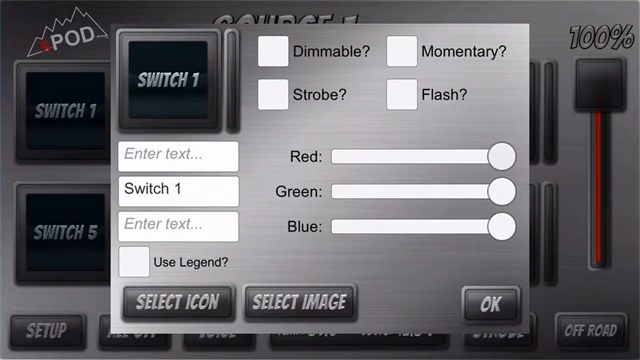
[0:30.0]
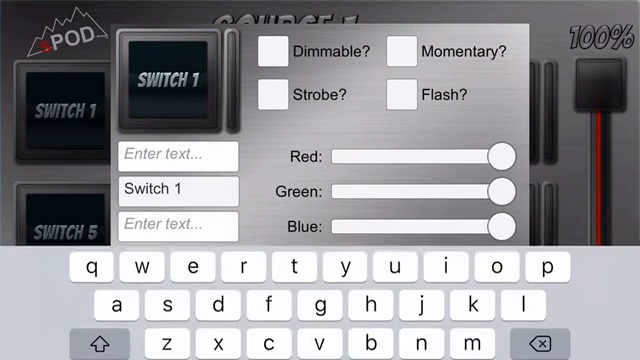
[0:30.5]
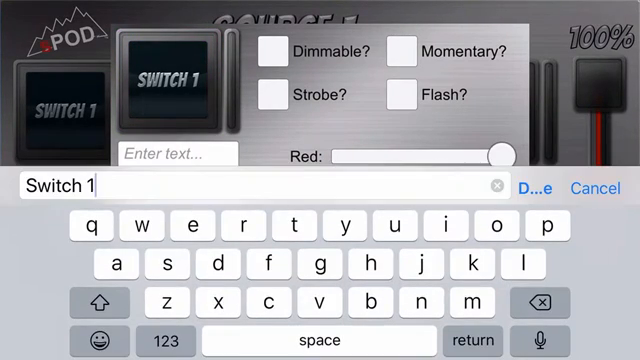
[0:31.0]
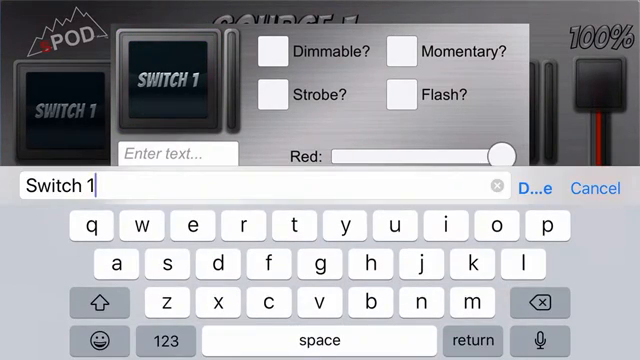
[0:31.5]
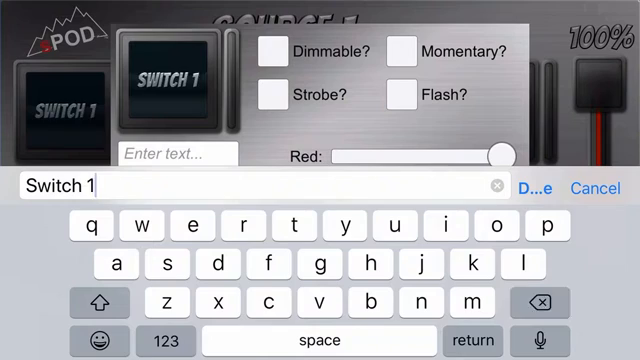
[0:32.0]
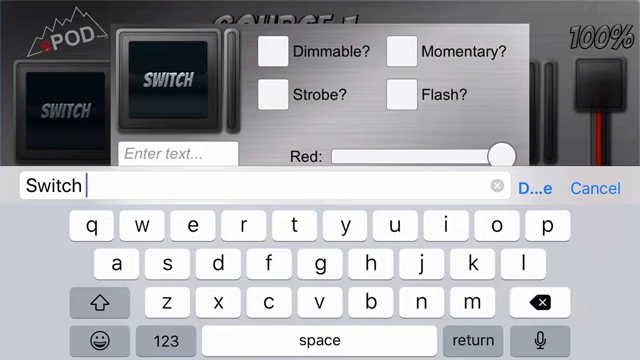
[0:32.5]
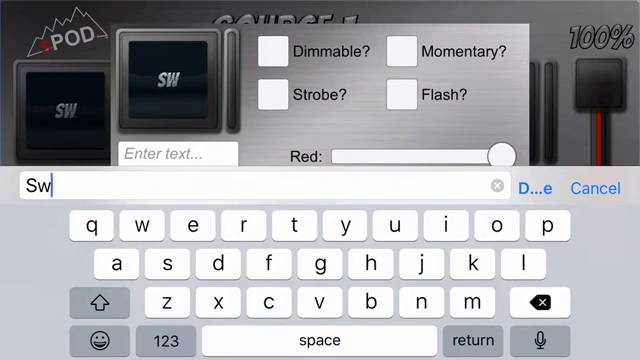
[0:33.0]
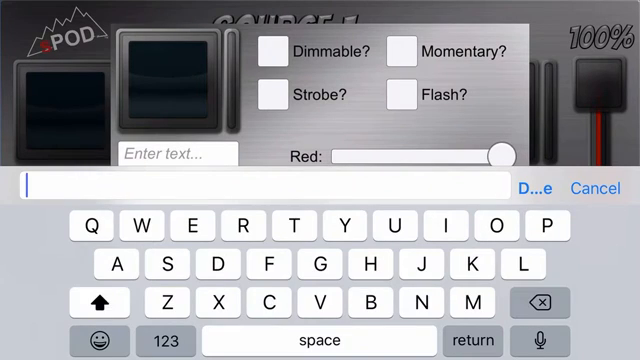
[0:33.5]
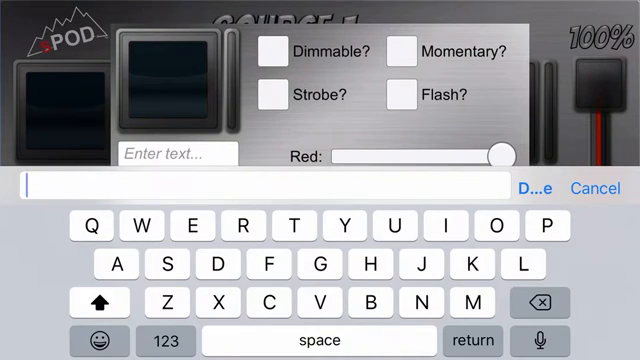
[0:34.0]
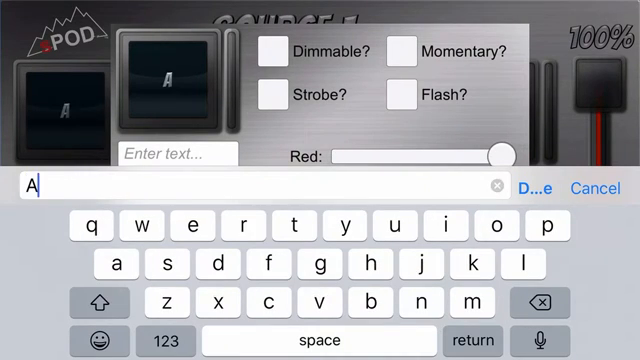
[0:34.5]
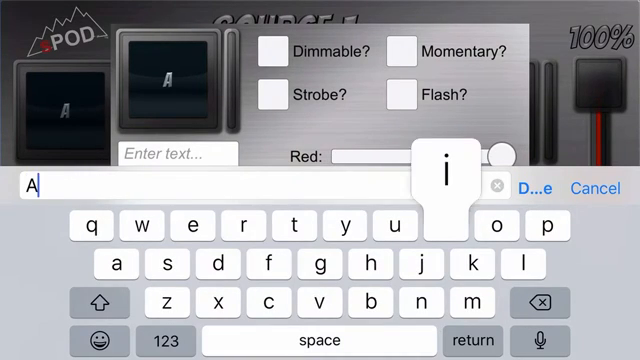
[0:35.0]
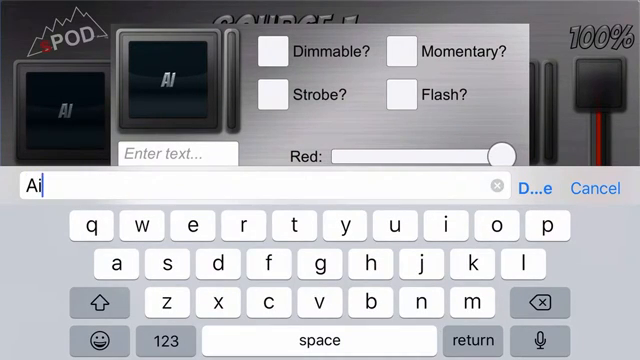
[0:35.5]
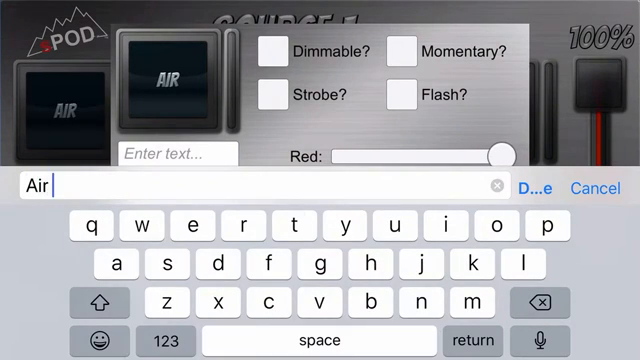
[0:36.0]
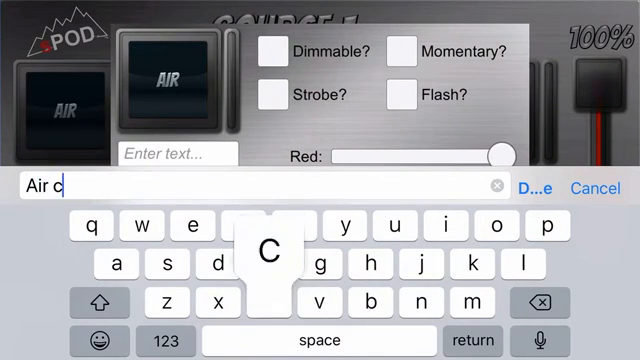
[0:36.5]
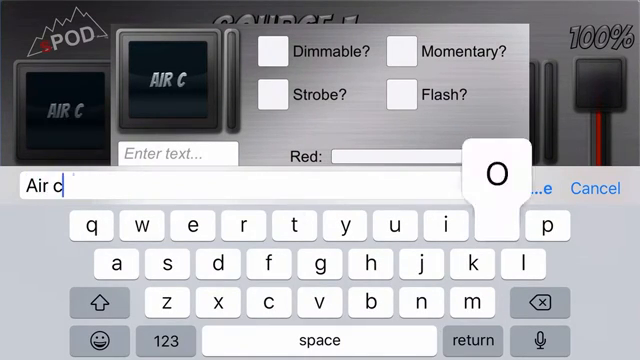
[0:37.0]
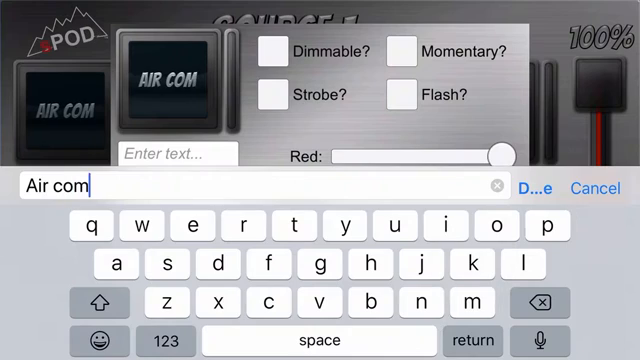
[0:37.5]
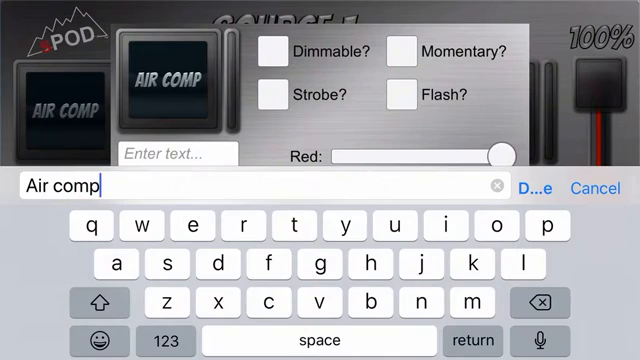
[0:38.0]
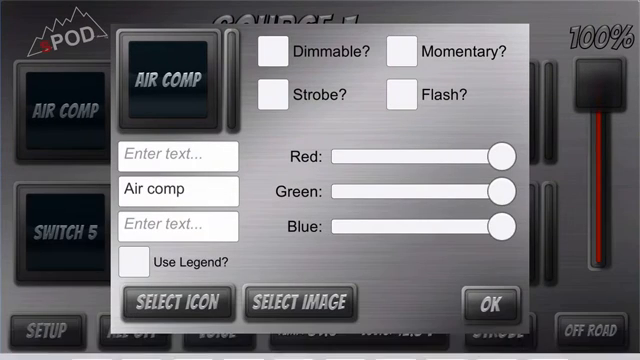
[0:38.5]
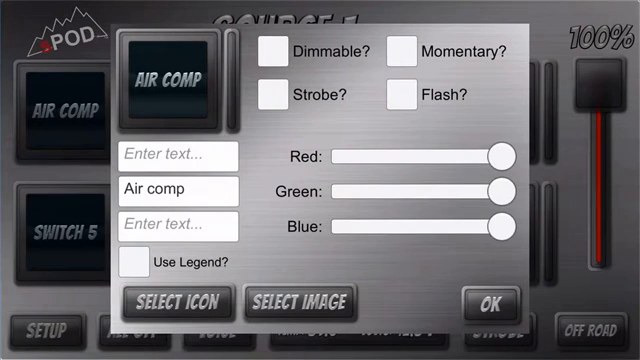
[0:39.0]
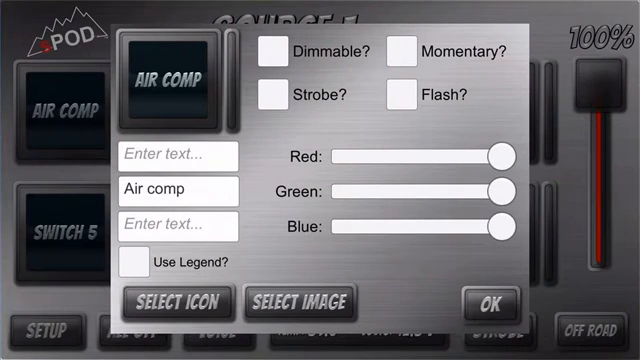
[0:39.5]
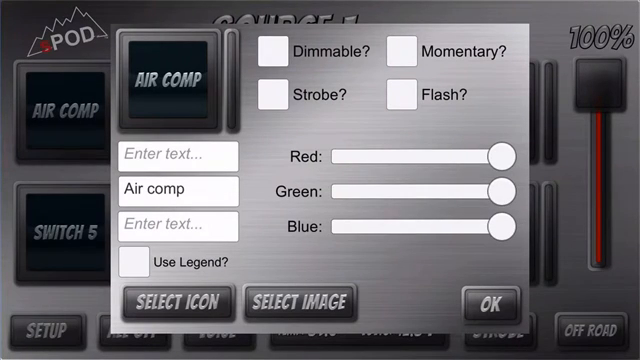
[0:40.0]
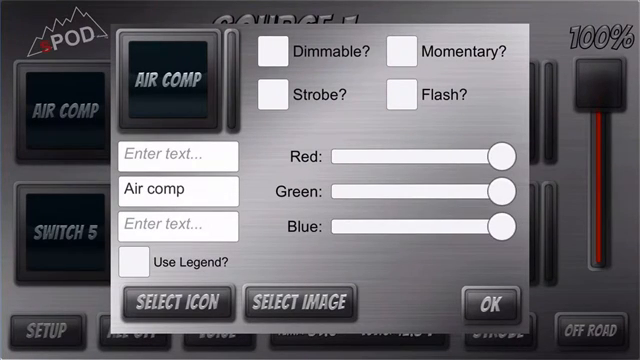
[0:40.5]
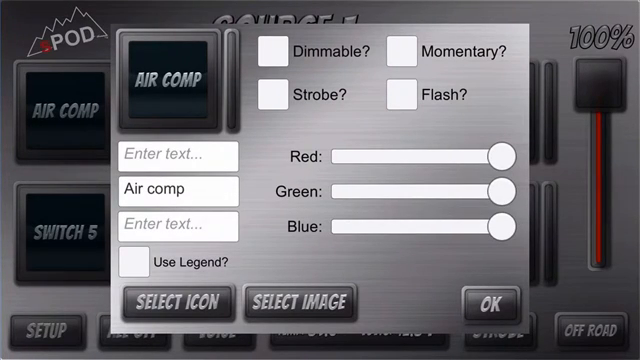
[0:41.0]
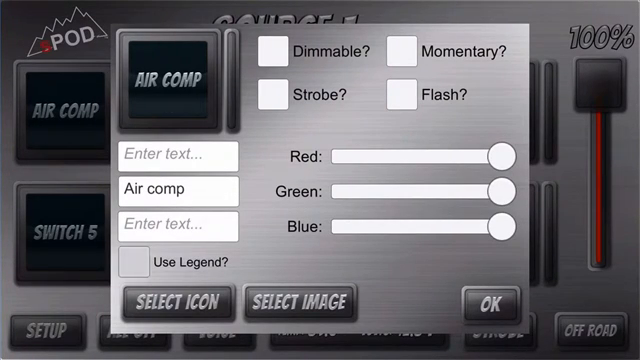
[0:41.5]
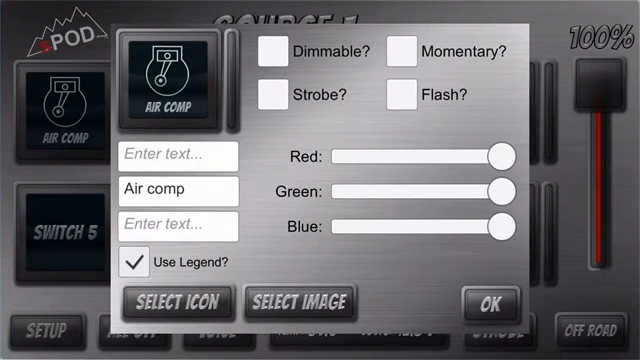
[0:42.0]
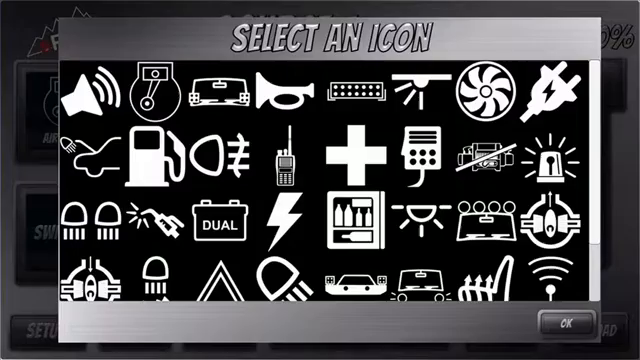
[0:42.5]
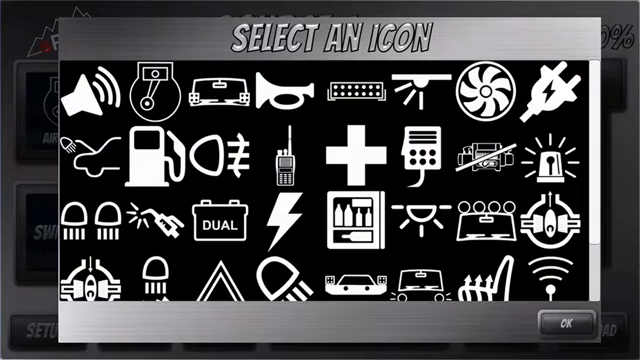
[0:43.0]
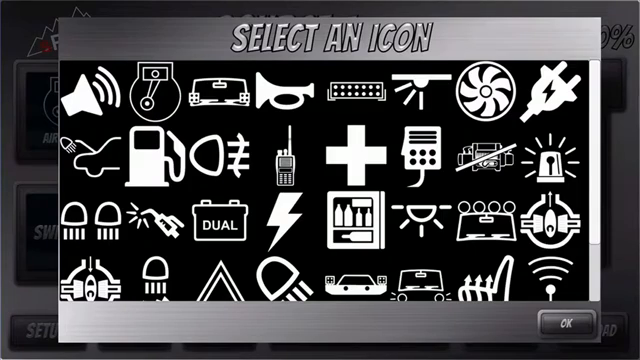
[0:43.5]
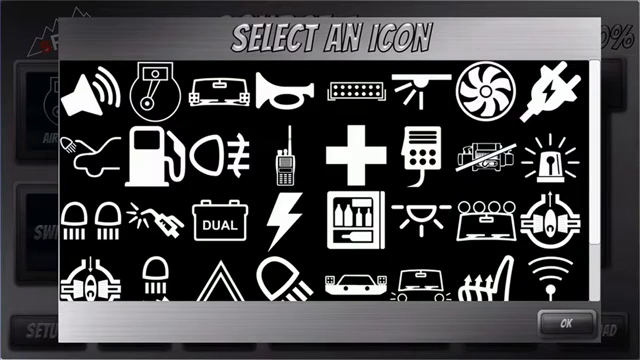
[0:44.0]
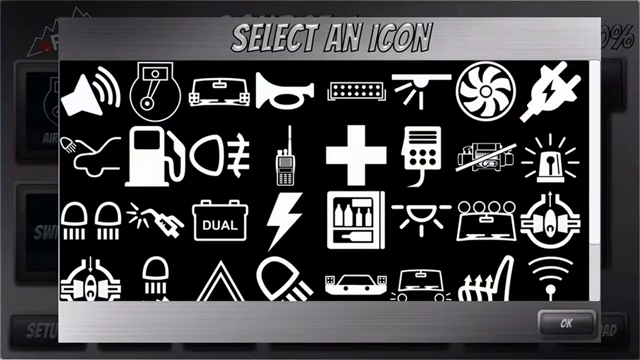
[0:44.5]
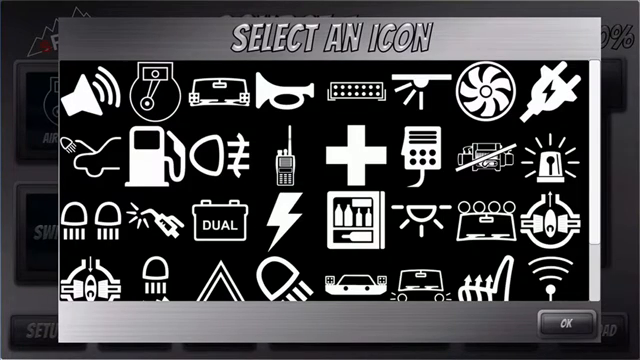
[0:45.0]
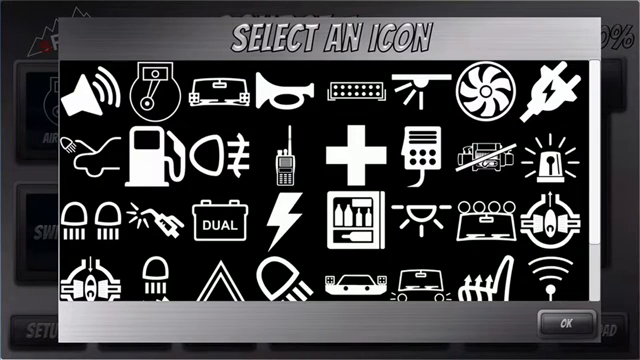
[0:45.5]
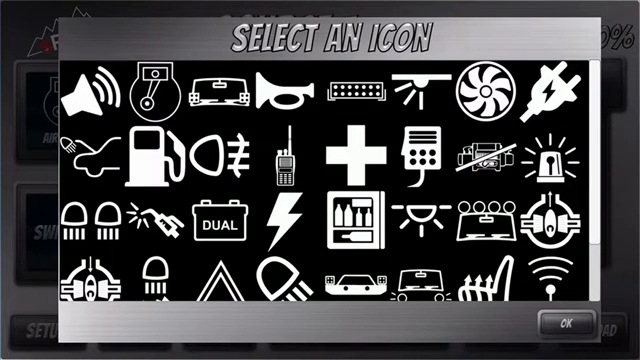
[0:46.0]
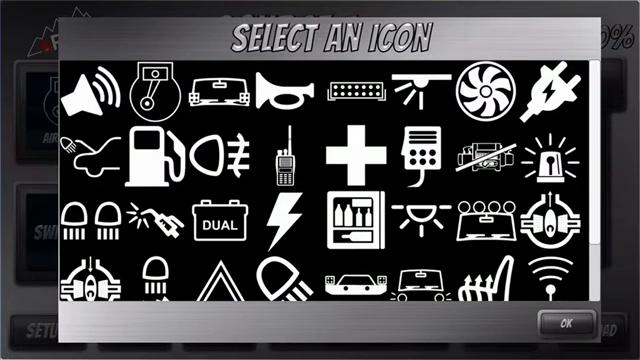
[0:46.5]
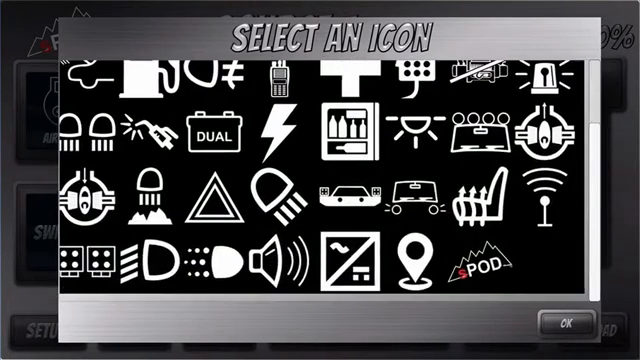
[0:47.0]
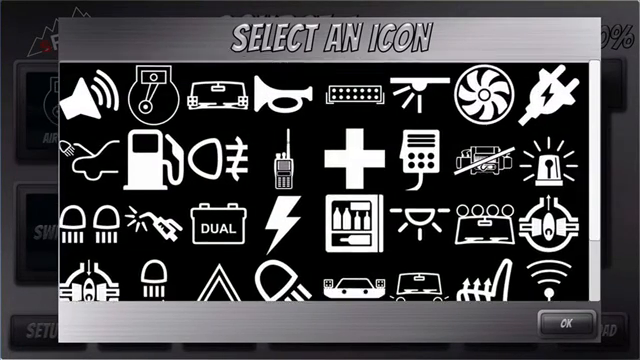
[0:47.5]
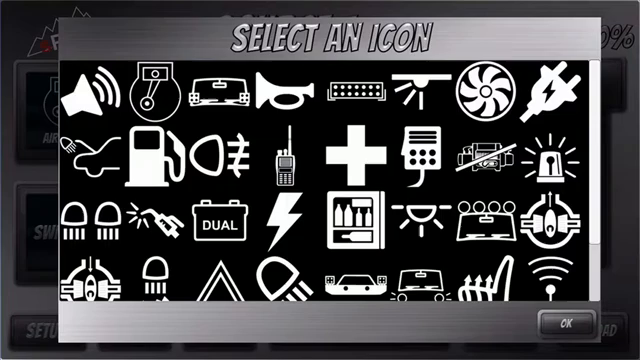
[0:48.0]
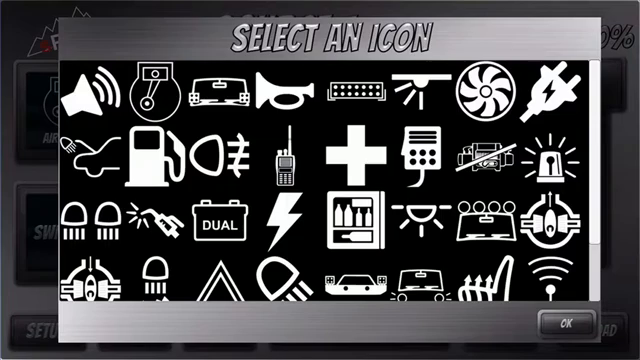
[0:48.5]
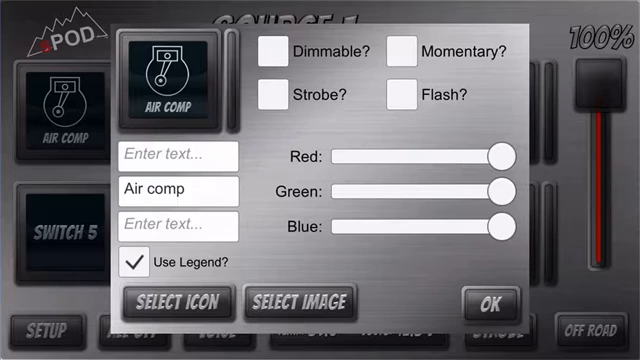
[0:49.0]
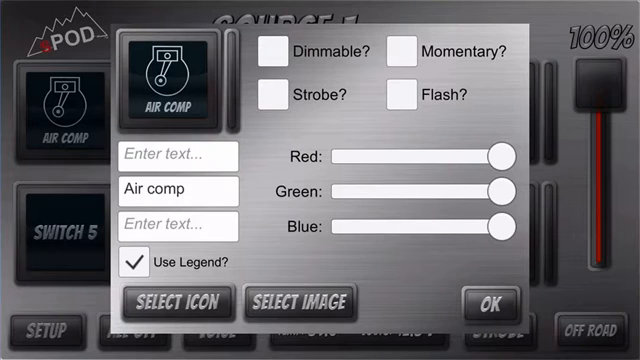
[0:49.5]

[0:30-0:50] The user opens the iOS keyboard and changes the name from switch1 to aircomp, then goes into a submenu showing the text along with an icon he can select. There appear to be 32 selectable icons, ranging across different devices and symbols such as a trumpet, a battery sign, an electricity sign and a Wi-Fi sign.